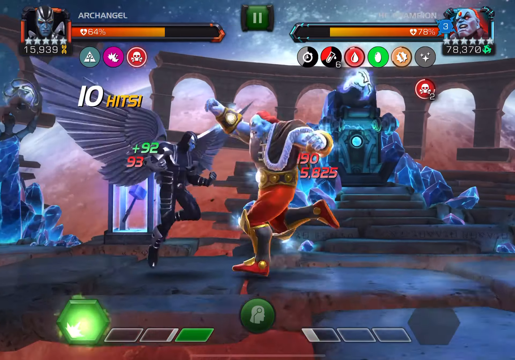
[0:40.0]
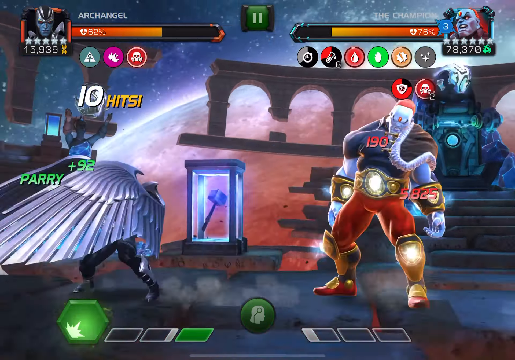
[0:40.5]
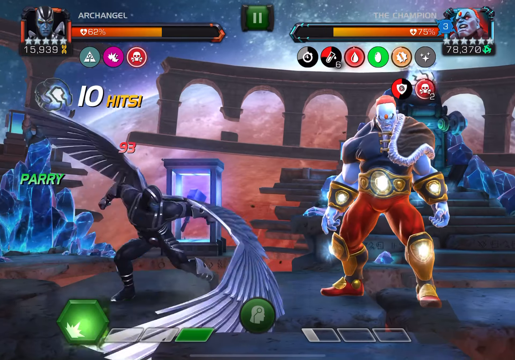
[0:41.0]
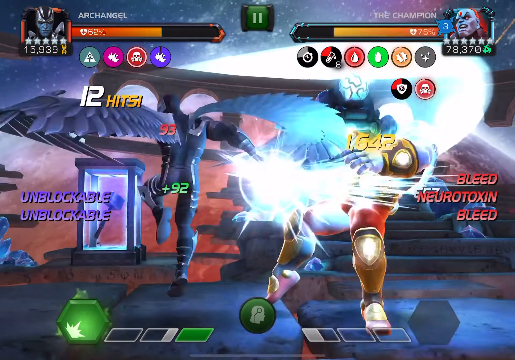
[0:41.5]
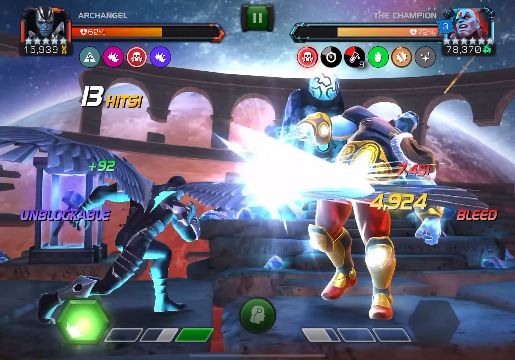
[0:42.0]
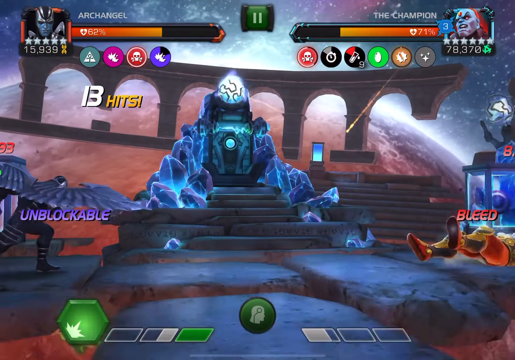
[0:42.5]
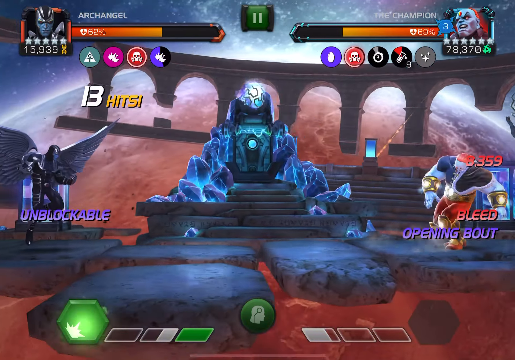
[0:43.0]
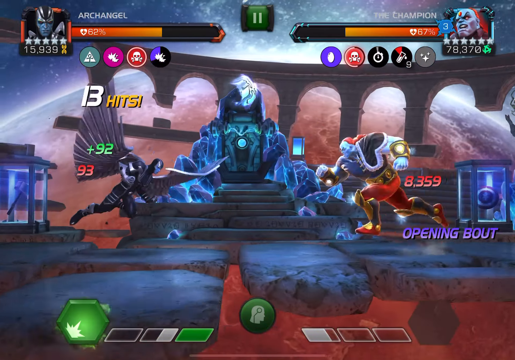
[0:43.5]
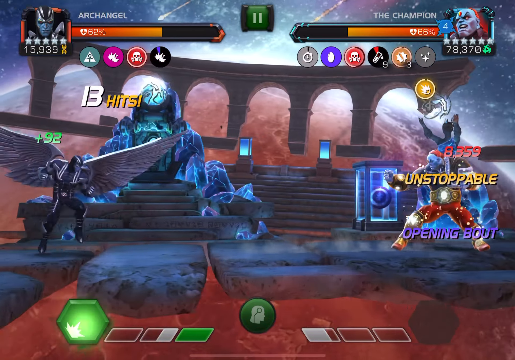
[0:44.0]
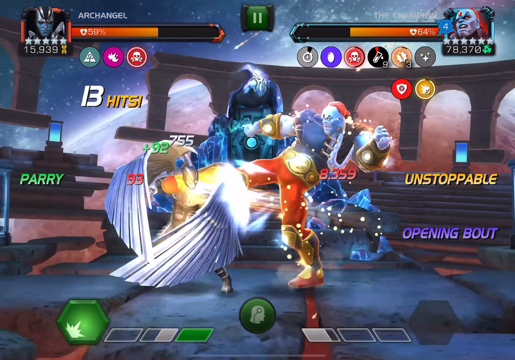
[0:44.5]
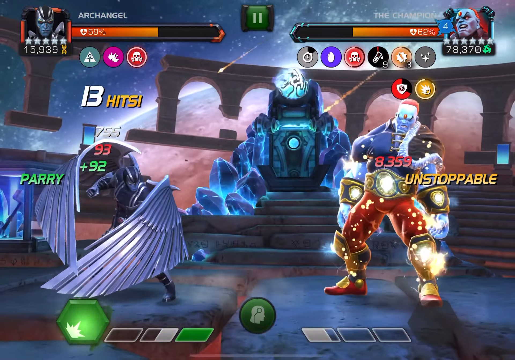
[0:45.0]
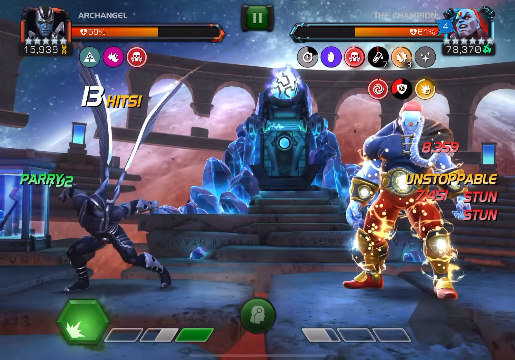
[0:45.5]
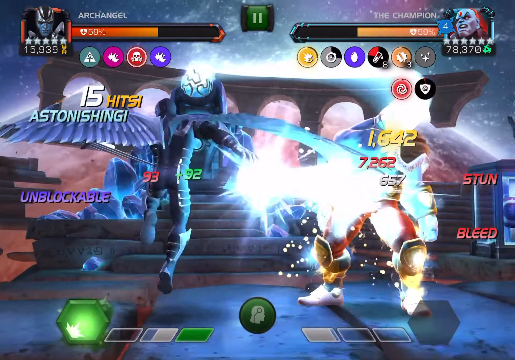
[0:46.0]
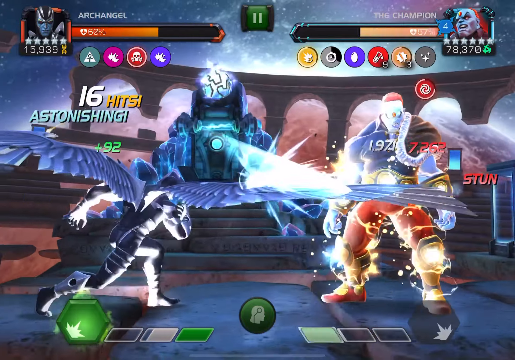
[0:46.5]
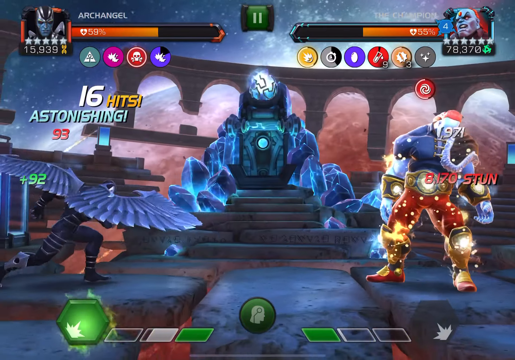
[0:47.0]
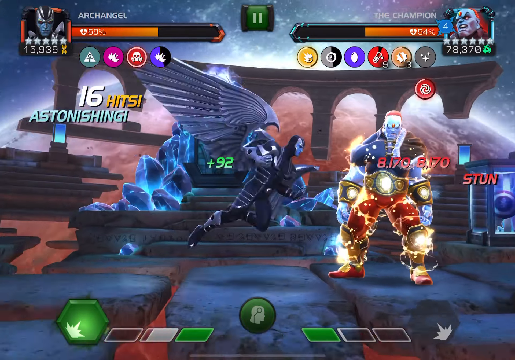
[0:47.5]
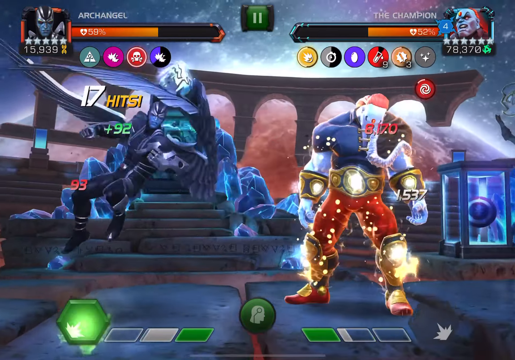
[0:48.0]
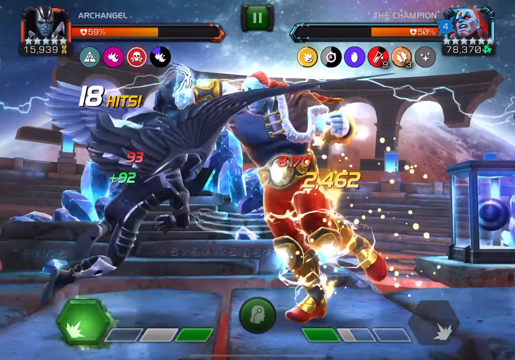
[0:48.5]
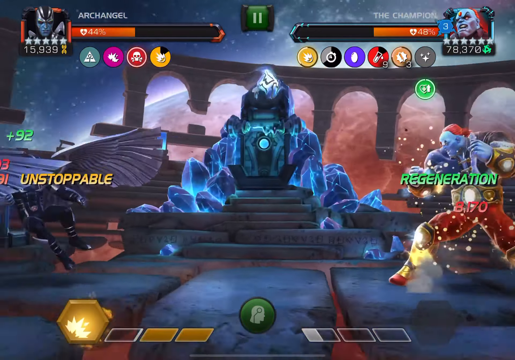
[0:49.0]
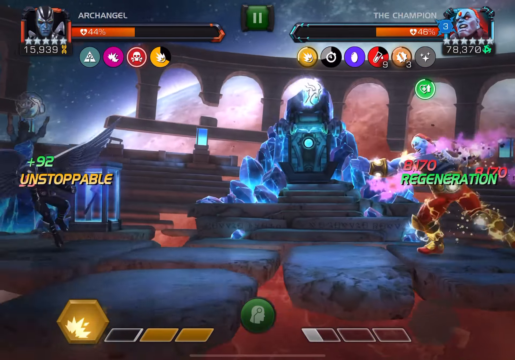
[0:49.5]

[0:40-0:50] Archangel fights the Champion in what appears to be a fighting game, with Archangel's health at the top left and the Champion's at the top right. At the start, Archangel's health is at 62% and the Champion's at 73%. Archangel is a black, ninja-looking angel with wings, and the Champion is a big blue man with orange hair and an orange gem on his forehead, plus what look like gold boots, a gold belt and gold bracelets around his arms. Archangel starts off with a few hits while the Champion looks stunned, building roughly a 13-hit combo. He runs up and hits him again, the Champion is stunned again, and Archangel keeps dealing damage, so by the end the fight is a little more even health-wise.